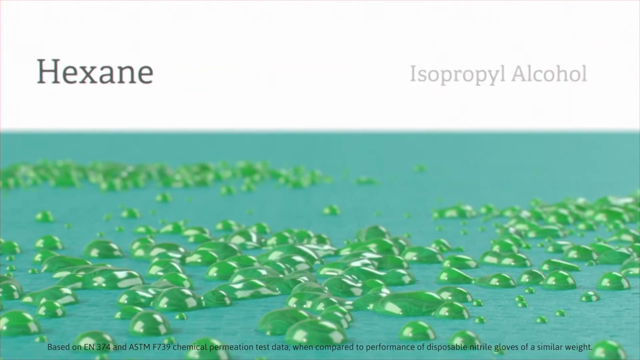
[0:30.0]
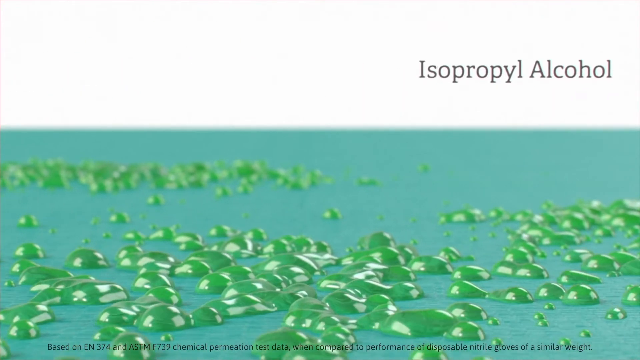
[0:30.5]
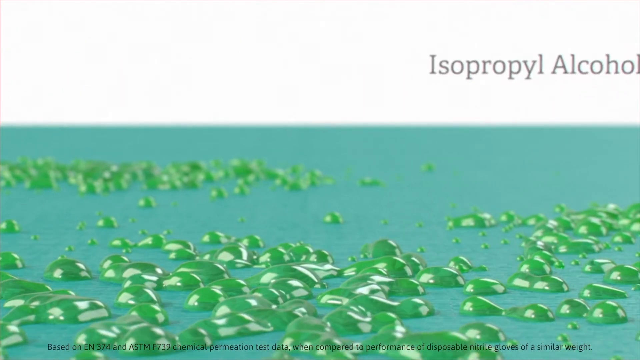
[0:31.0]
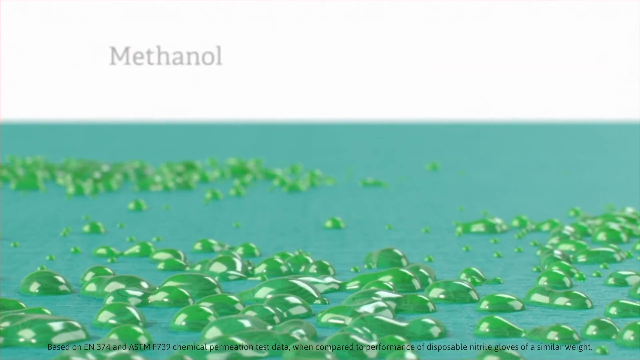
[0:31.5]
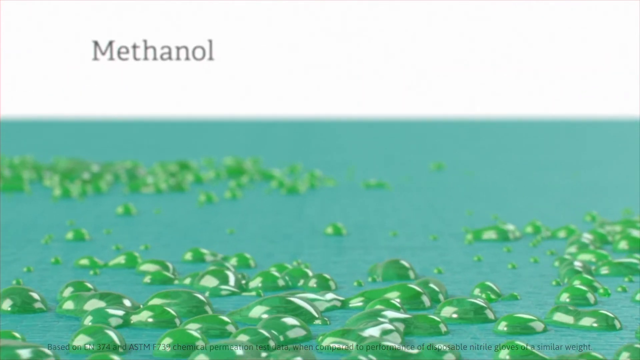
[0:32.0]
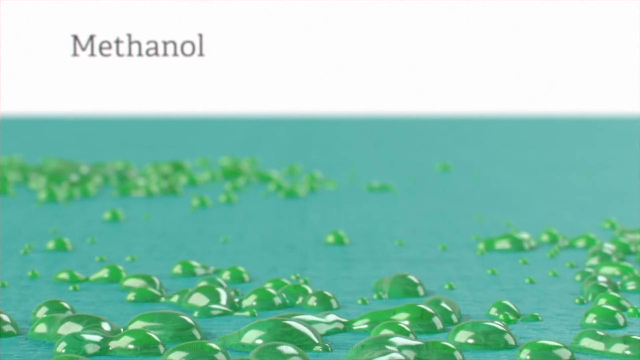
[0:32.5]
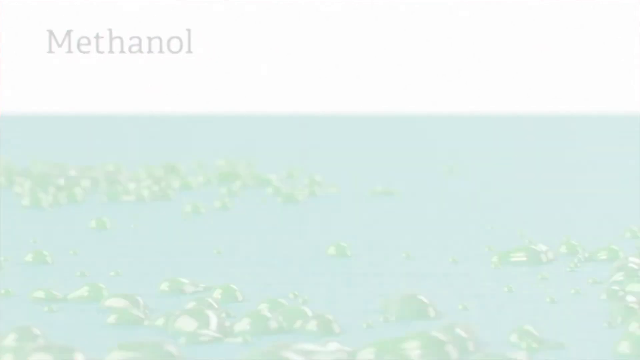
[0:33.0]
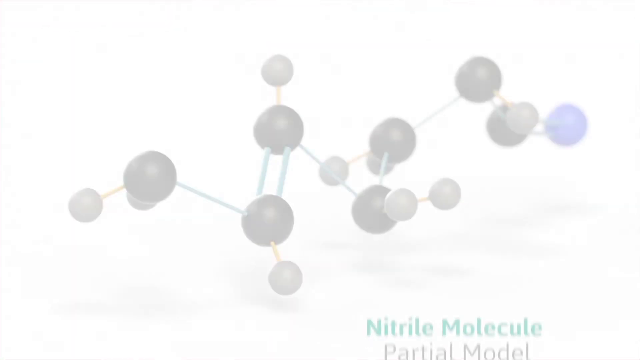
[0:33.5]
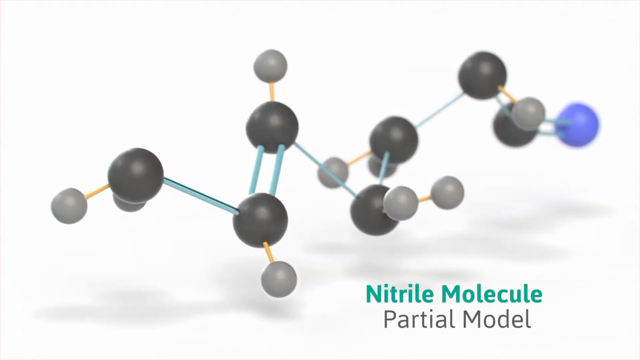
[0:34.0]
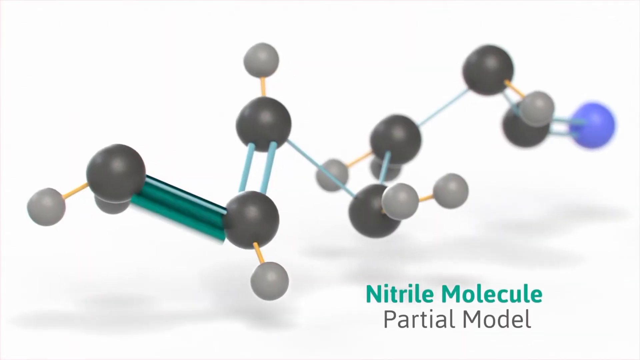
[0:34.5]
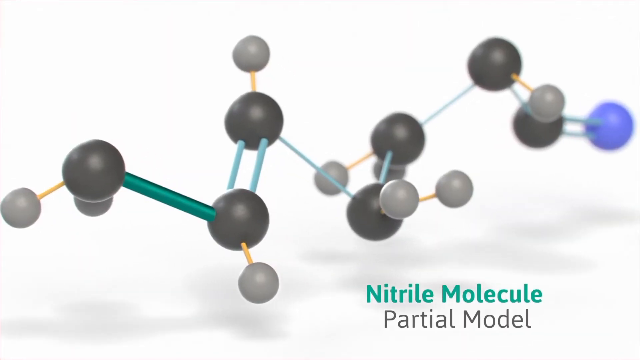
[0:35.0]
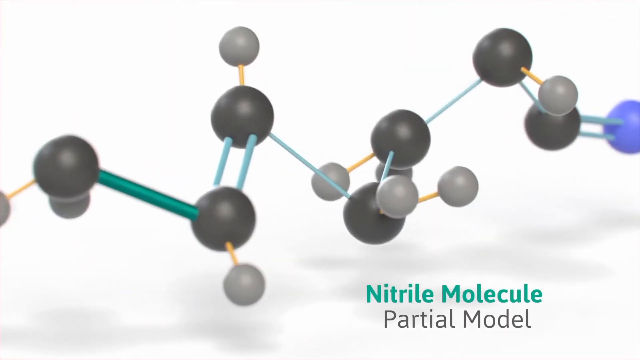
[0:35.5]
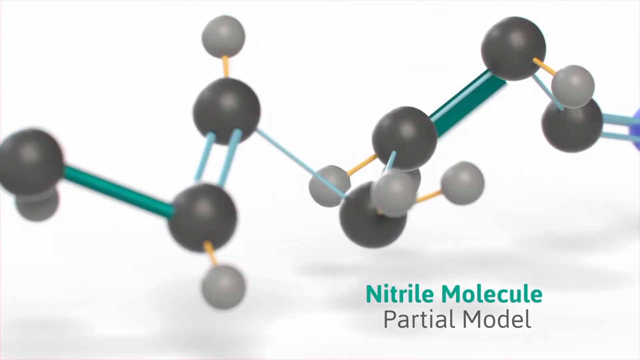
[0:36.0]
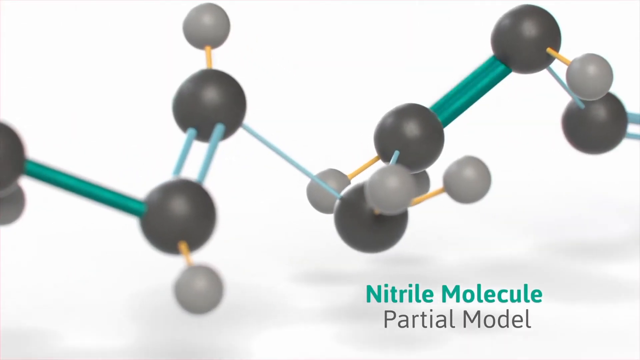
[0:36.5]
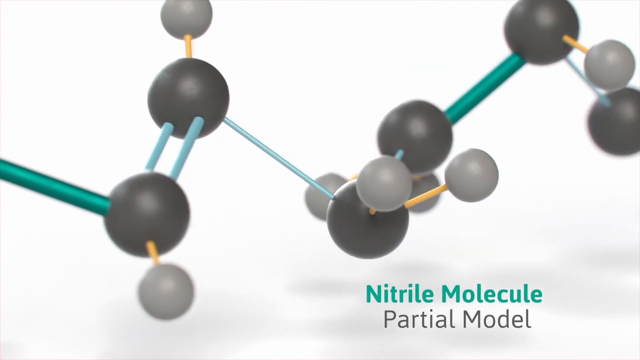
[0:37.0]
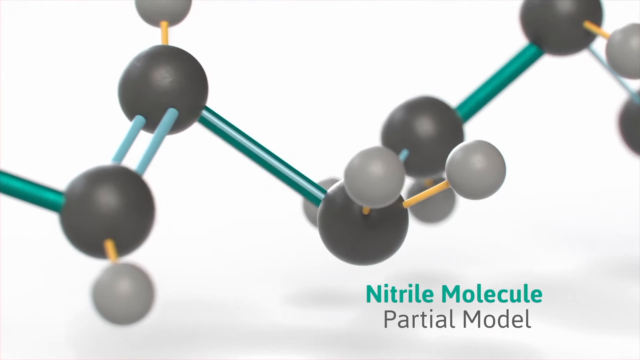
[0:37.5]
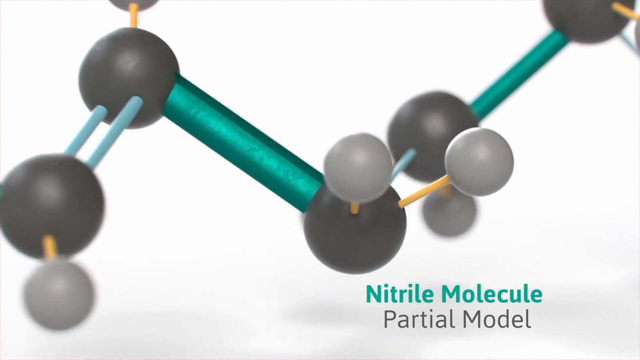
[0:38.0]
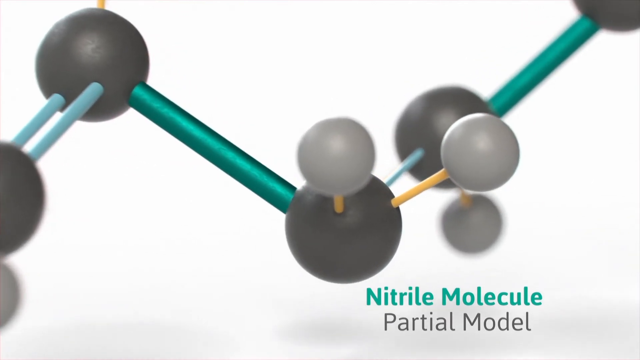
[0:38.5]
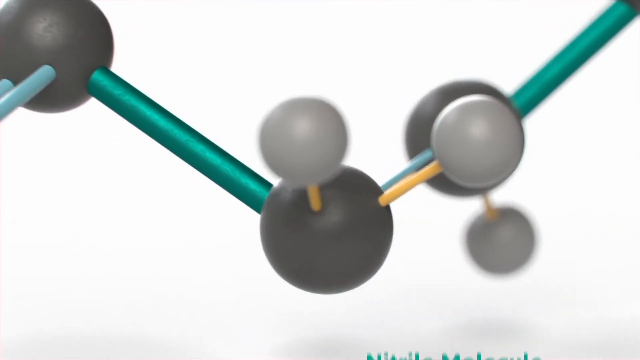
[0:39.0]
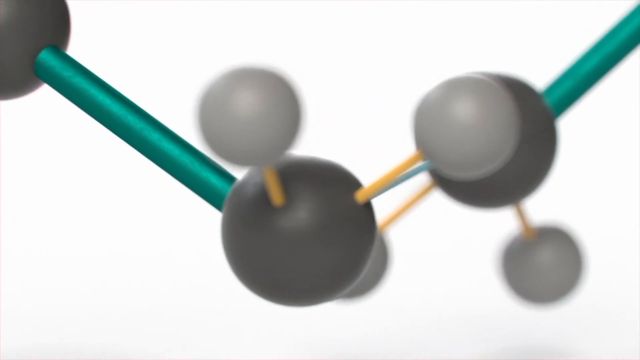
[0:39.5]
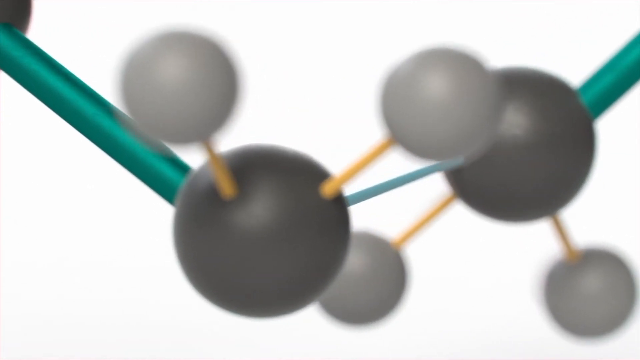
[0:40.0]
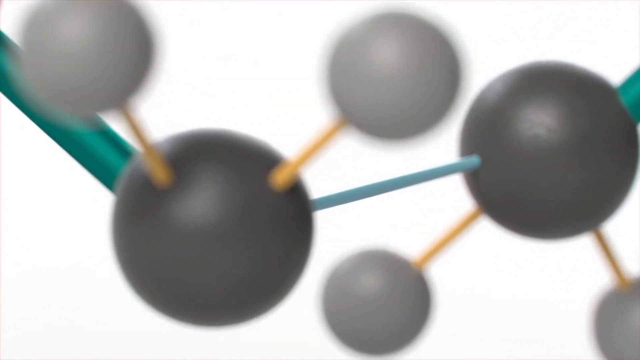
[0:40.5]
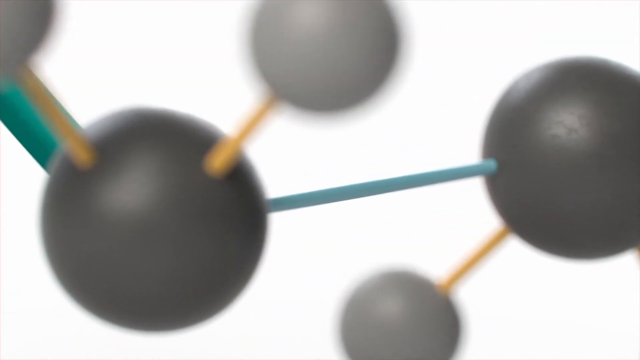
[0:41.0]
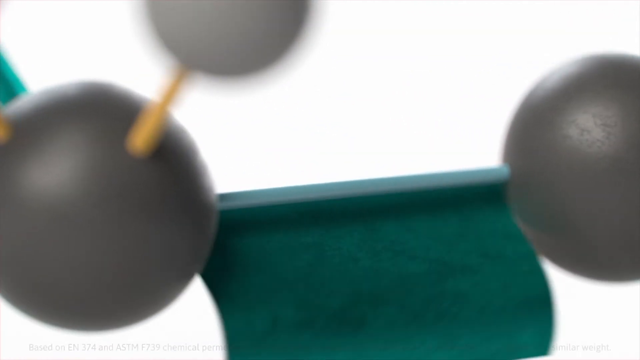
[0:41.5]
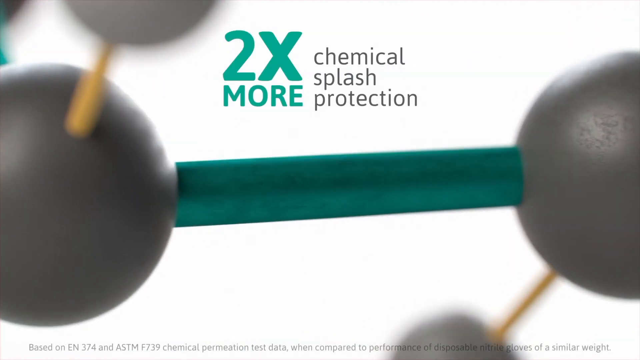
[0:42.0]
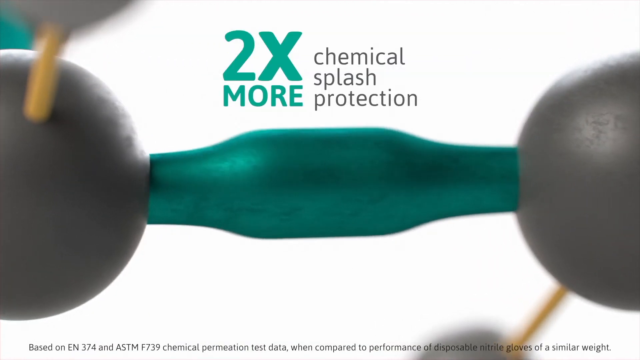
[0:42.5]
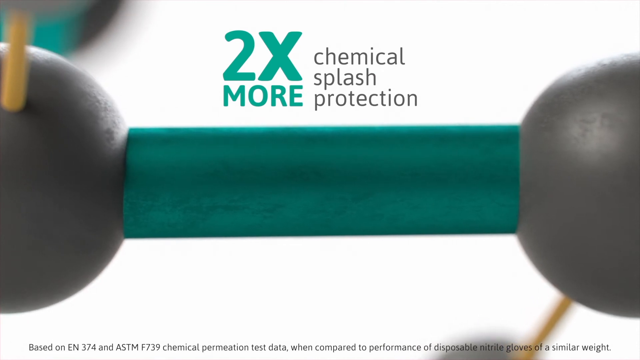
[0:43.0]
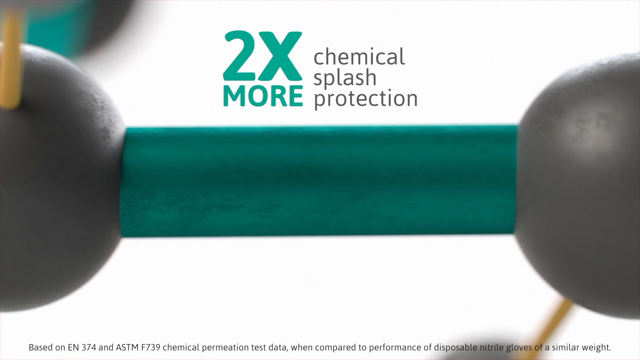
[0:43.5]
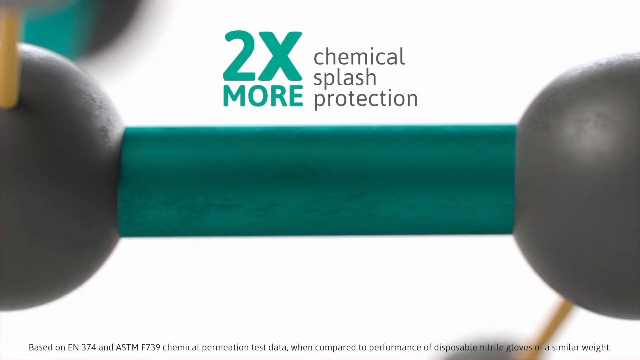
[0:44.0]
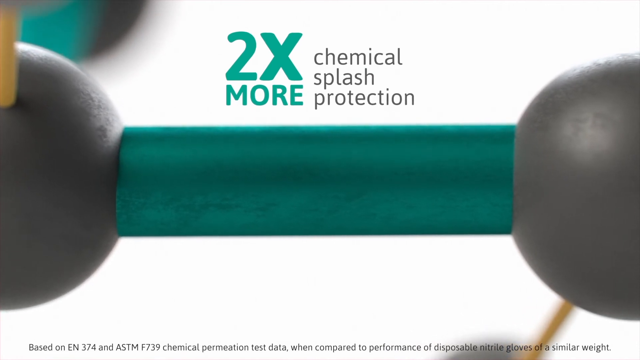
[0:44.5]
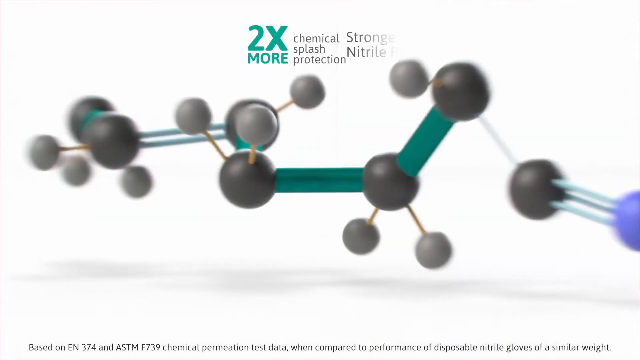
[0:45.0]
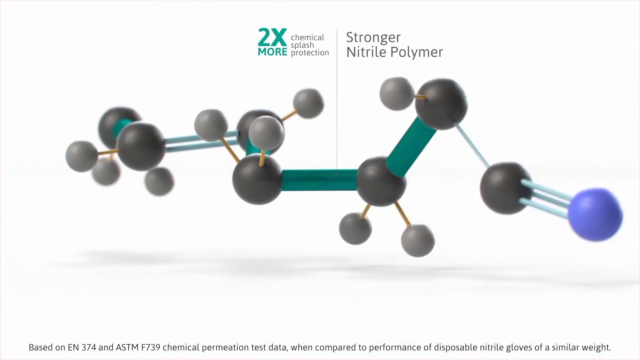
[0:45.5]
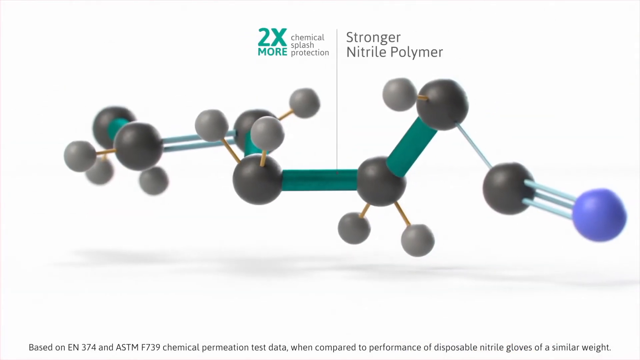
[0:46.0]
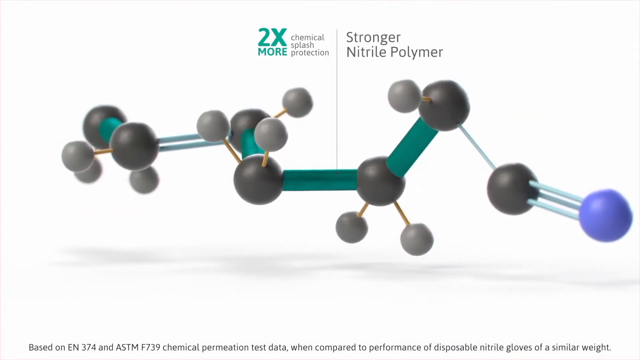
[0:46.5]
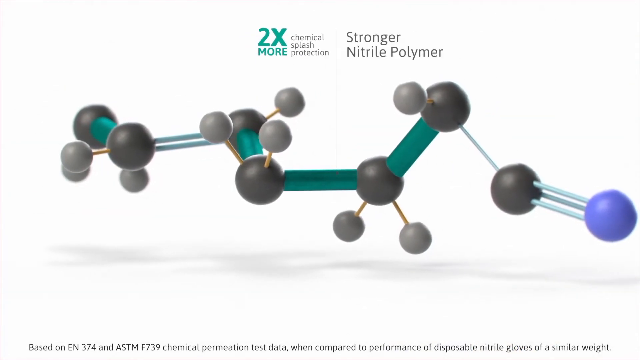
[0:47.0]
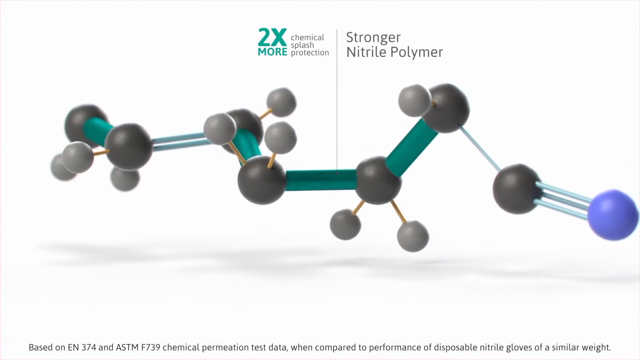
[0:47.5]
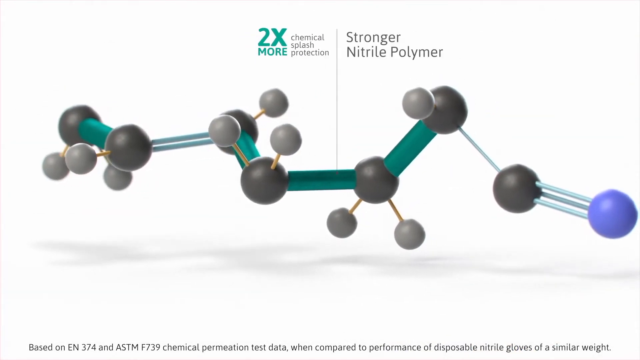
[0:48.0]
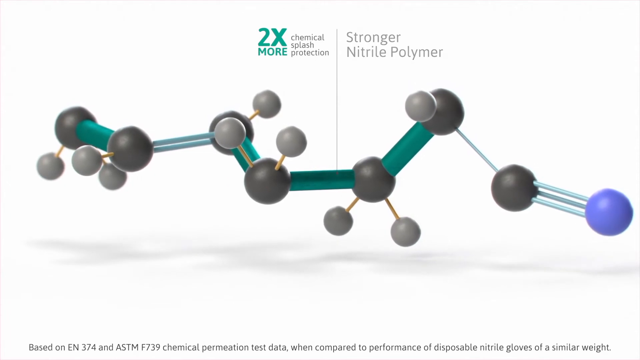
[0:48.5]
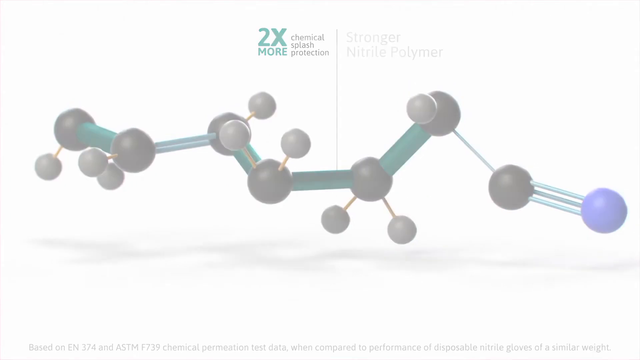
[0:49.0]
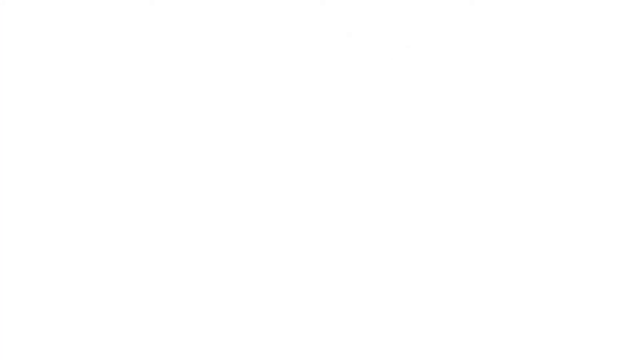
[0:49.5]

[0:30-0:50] Against a teal-blue background, the color of the gloves, bright green liquid droplets fall on things as names of chemicals appear: "hexane," "isopropyl alcohol," "methanol." Text reads "nitrile molecule partial model" beside a molecular model of some sort of chemical, or maybe of what the gloves are made of. The view zooms in on bright teal-blue things that kind of flap around and wrap around the connectors between the molecules, and it zooms in further. Text reads "two times more chemical splash protection," "stronger nitrile polymer," and "the microflex."